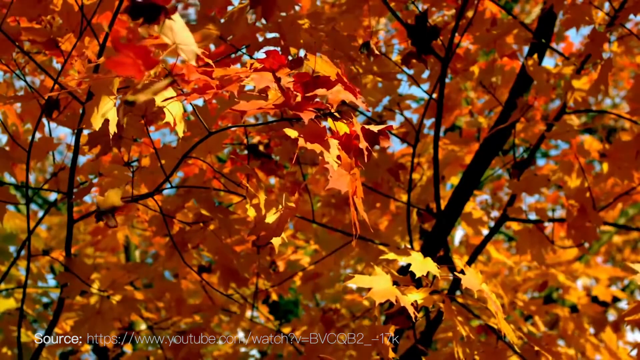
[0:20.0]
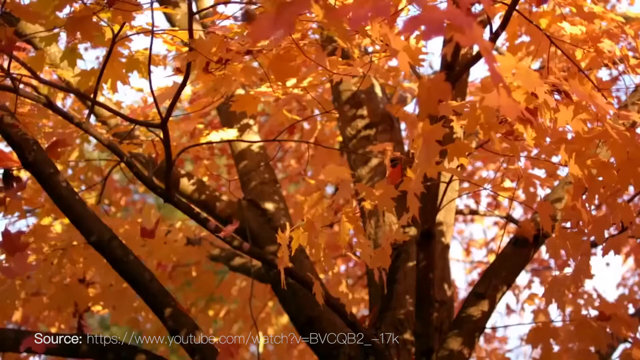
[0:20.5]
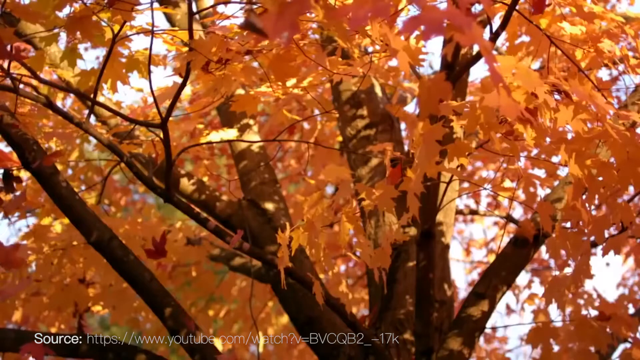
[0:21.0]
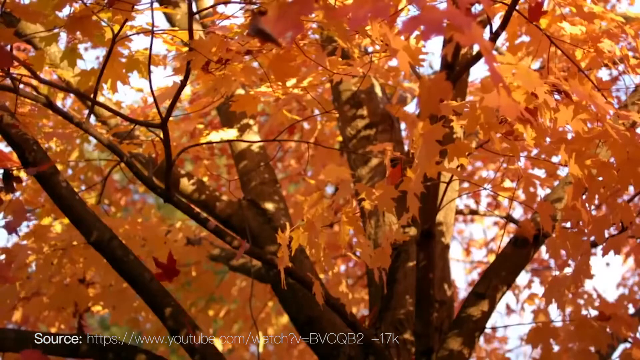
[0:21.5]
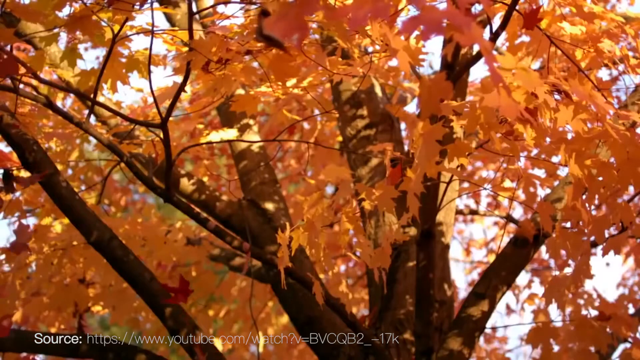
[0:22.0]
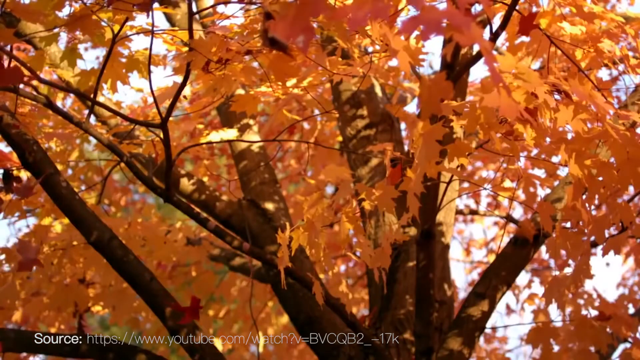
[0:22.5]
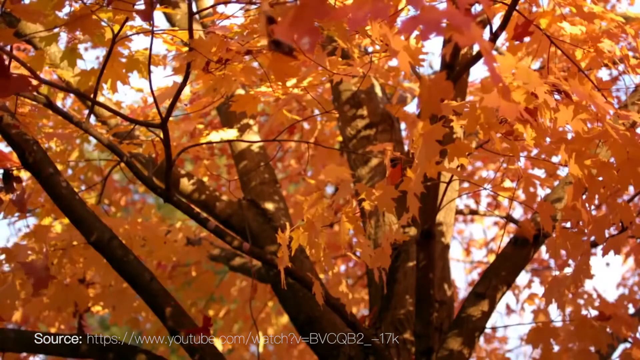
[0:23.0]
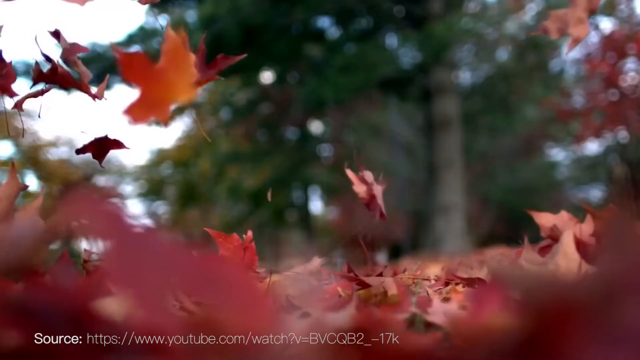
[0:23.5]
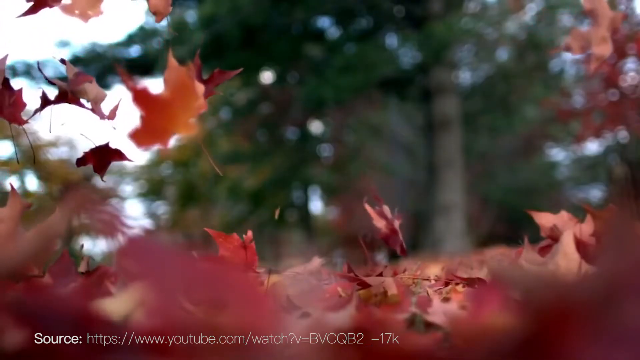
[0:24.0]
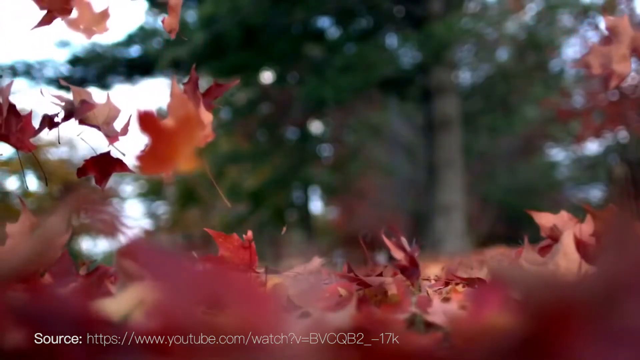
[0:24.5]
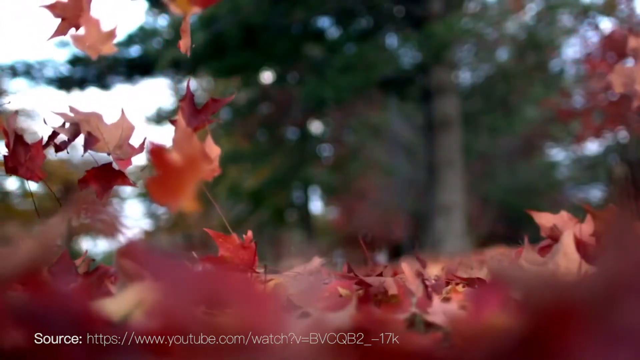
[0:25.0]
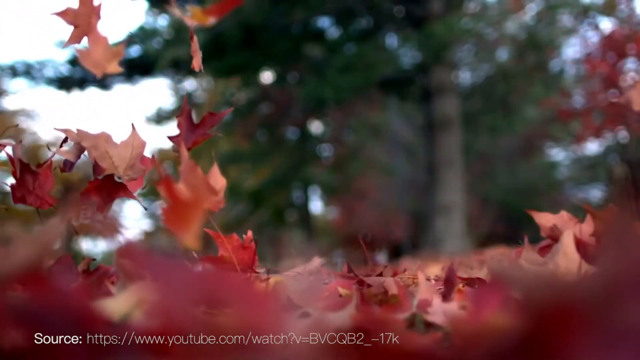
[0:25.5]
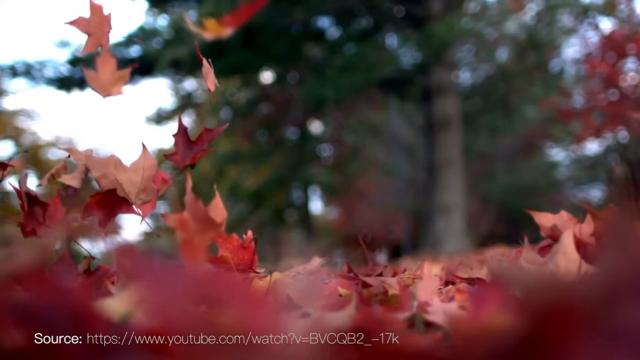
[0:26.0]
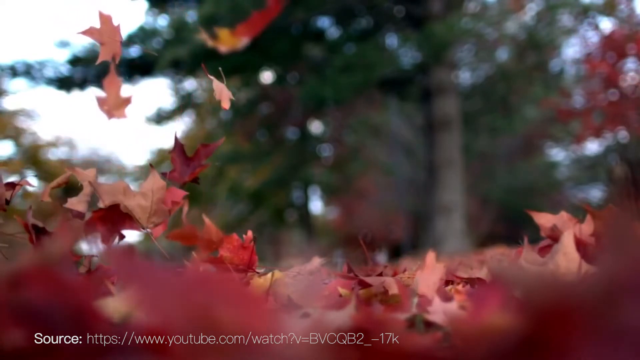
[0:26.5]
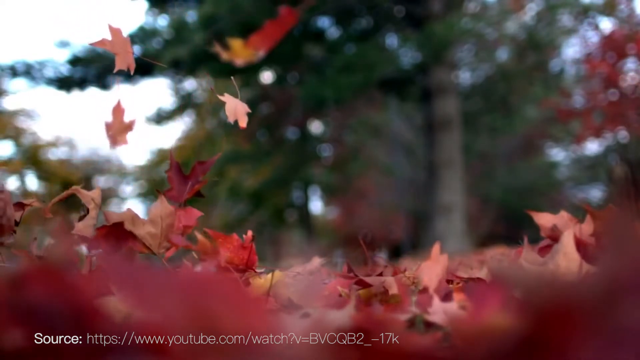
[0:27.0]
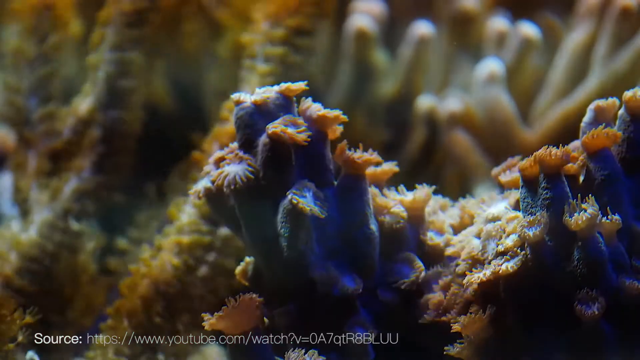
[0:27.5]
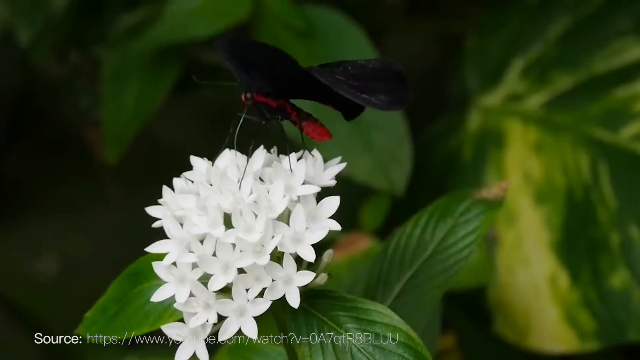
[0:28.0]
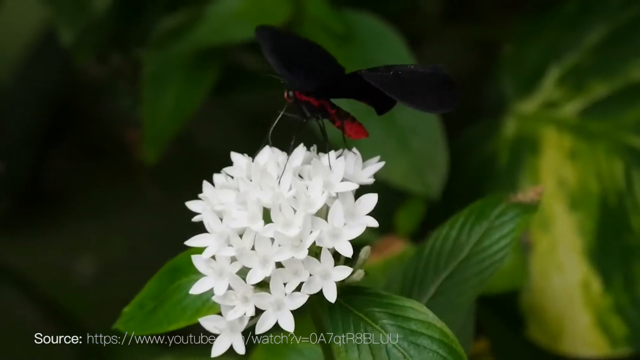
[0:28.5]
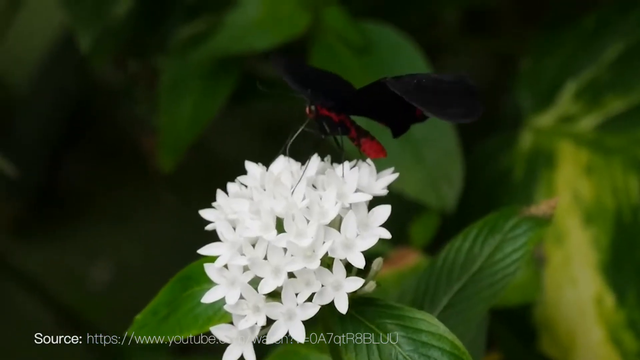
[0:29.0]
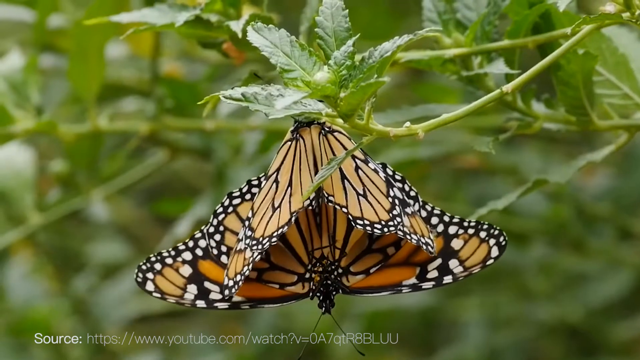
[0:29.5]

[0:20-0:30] On a crystal clear day, a close-up shows many leaves on a tree starting to change color in the fall and beginning to gently fall to the ground. The same leaves hit the ground and gather together there. Briefly, the view goes underwater, showing the vibrations of the water over a coral reef. Then a butterfly alights on a flower, followed by another butterfly seen in an upside-down close-up.